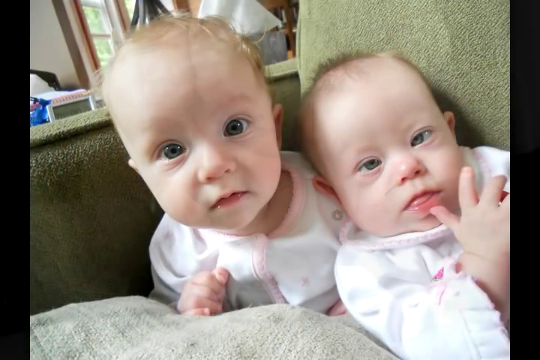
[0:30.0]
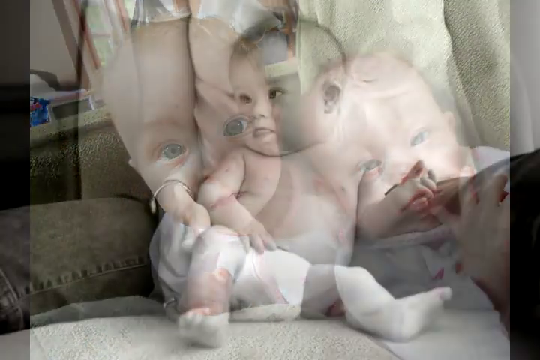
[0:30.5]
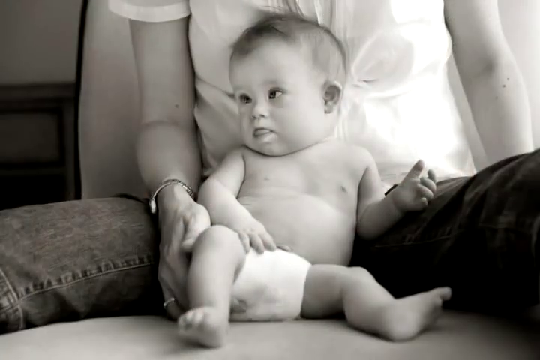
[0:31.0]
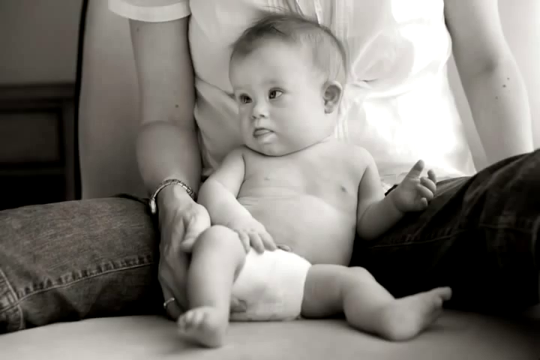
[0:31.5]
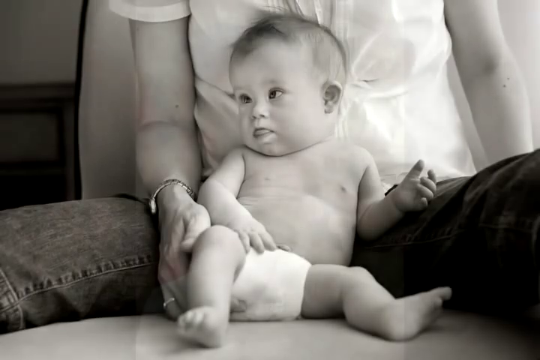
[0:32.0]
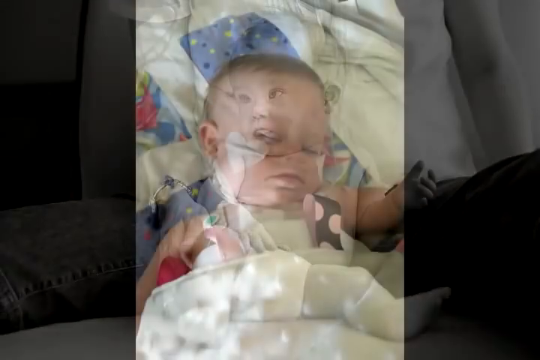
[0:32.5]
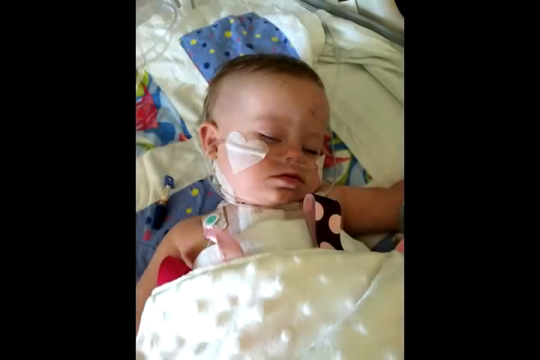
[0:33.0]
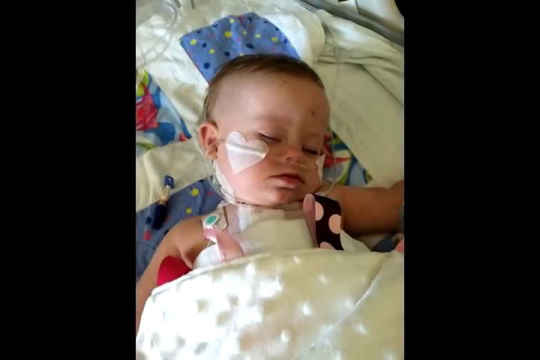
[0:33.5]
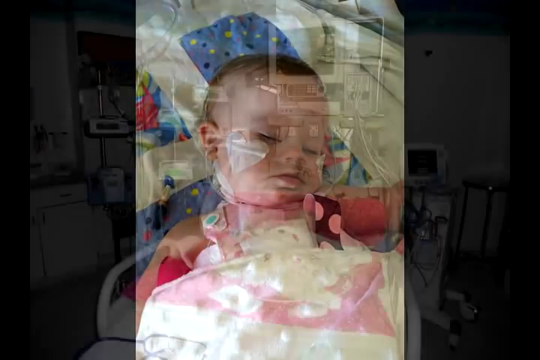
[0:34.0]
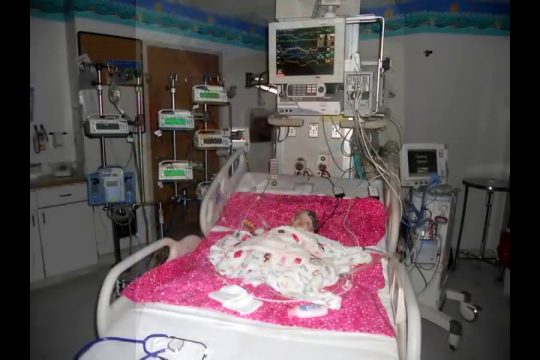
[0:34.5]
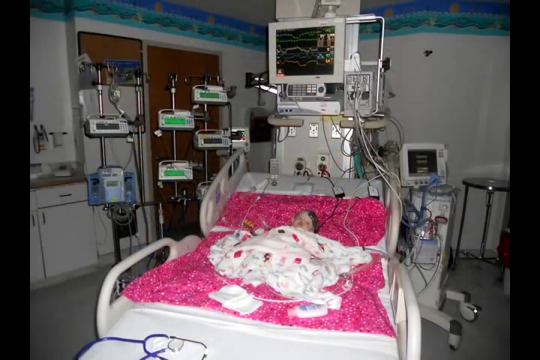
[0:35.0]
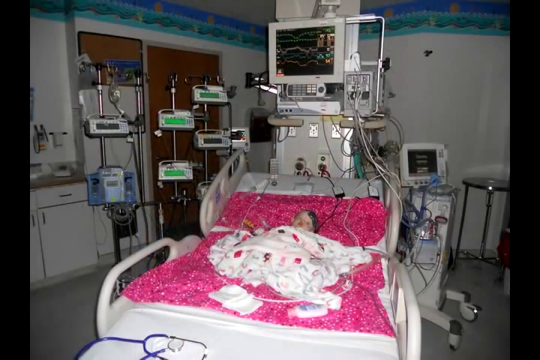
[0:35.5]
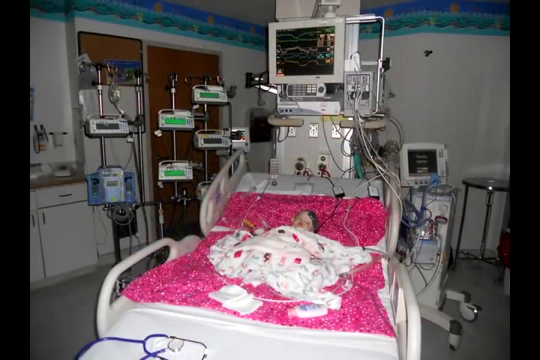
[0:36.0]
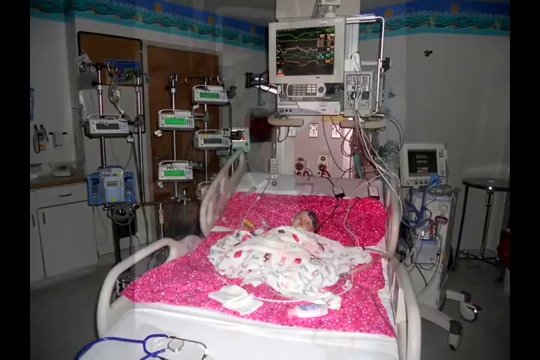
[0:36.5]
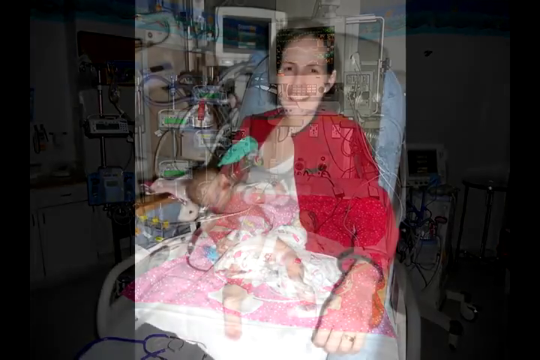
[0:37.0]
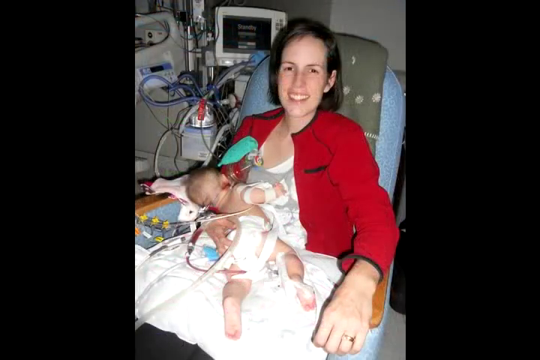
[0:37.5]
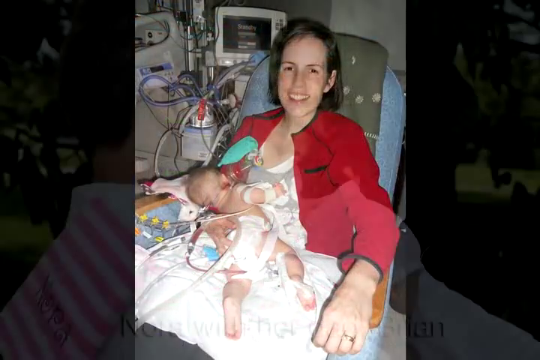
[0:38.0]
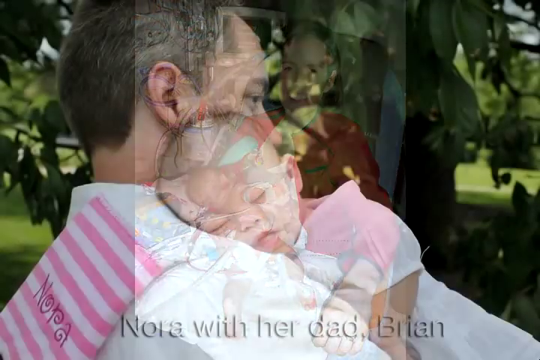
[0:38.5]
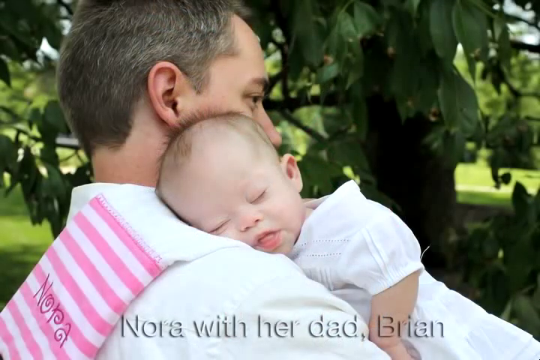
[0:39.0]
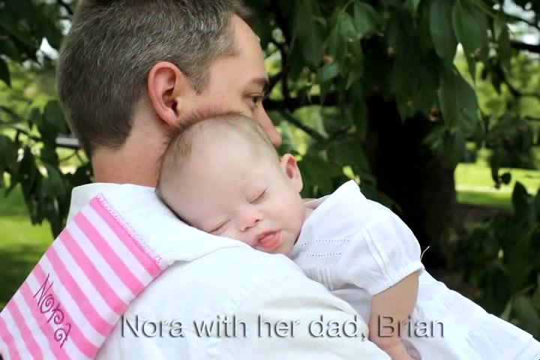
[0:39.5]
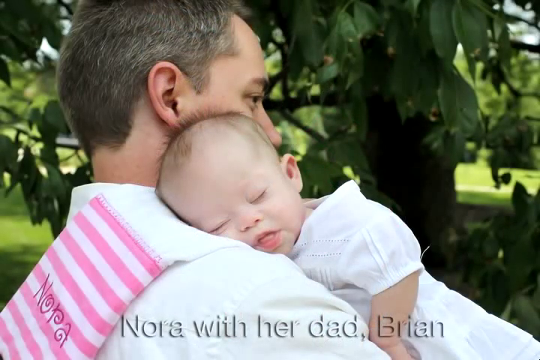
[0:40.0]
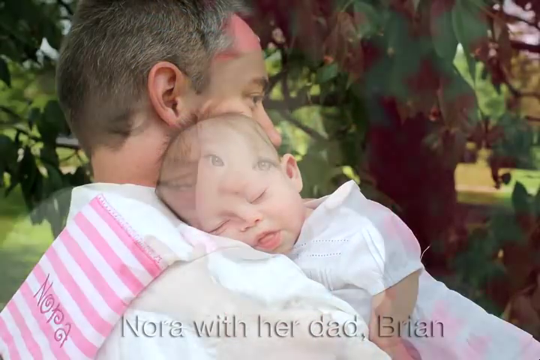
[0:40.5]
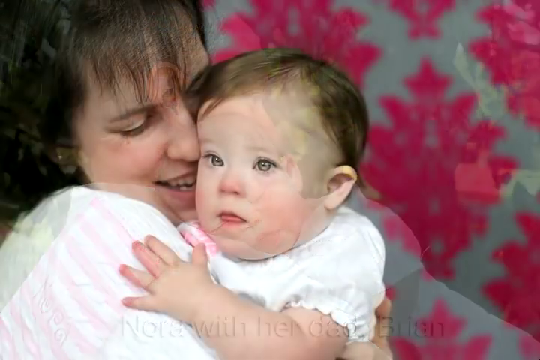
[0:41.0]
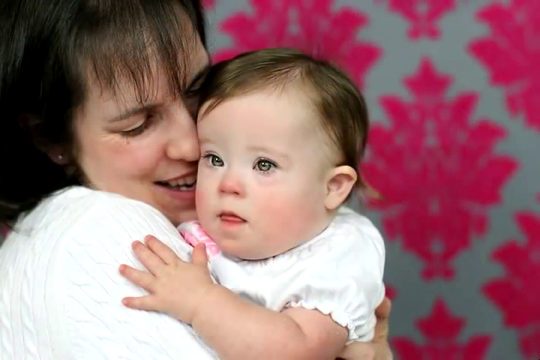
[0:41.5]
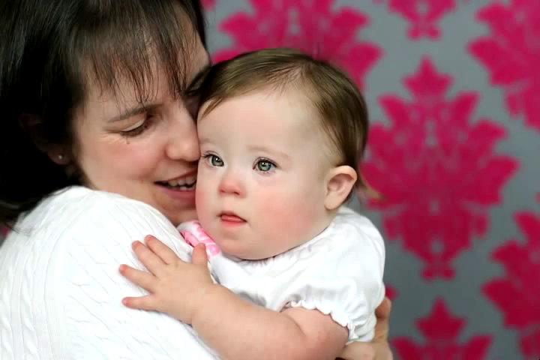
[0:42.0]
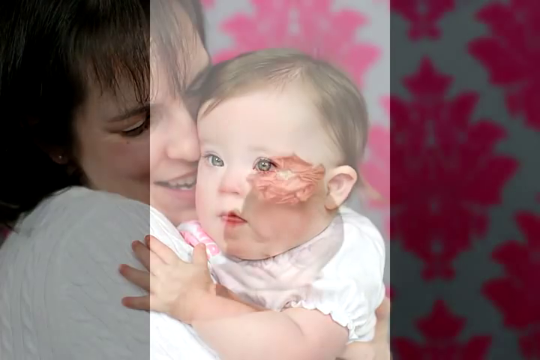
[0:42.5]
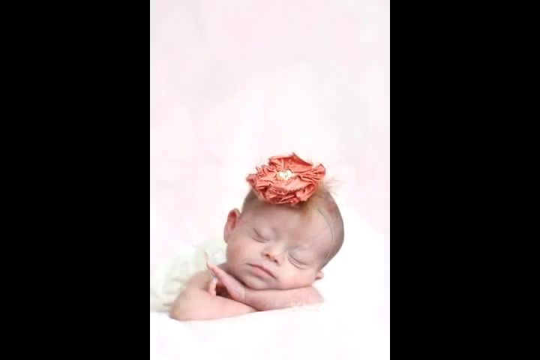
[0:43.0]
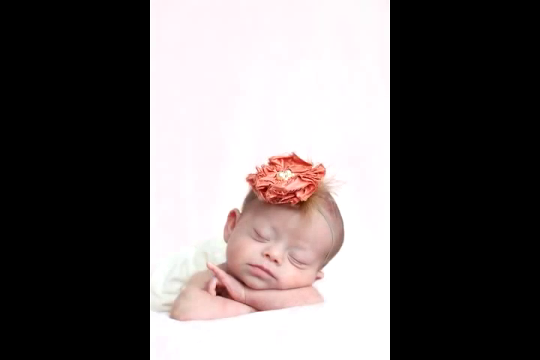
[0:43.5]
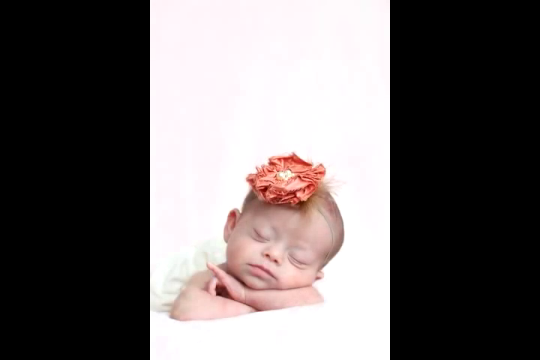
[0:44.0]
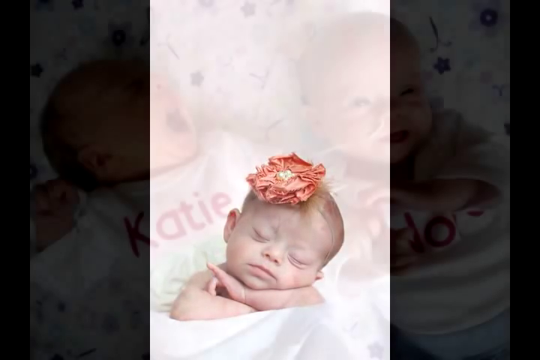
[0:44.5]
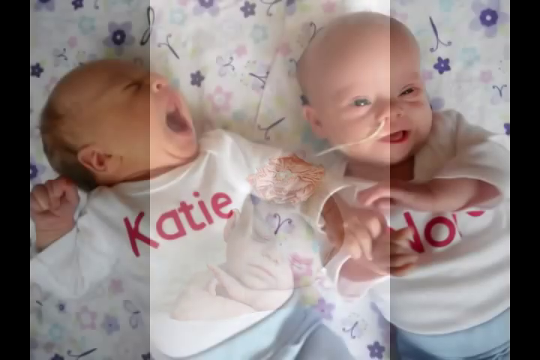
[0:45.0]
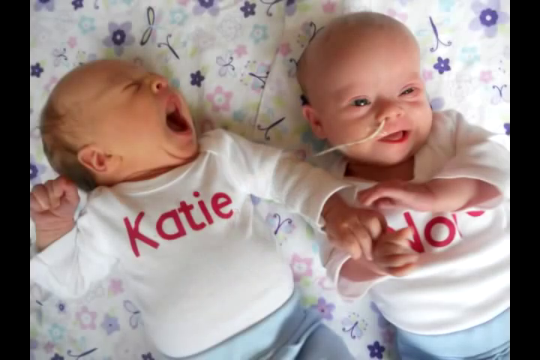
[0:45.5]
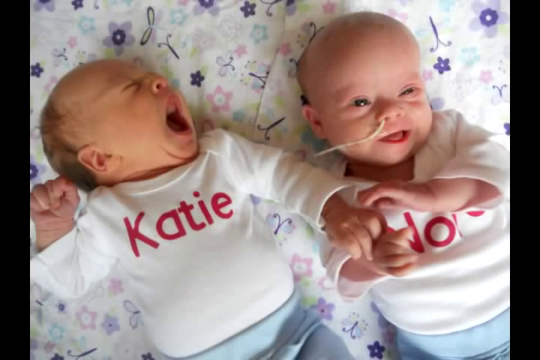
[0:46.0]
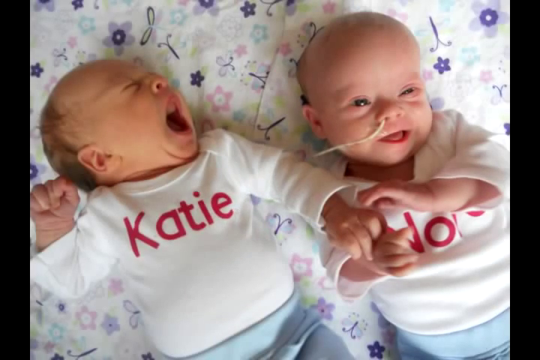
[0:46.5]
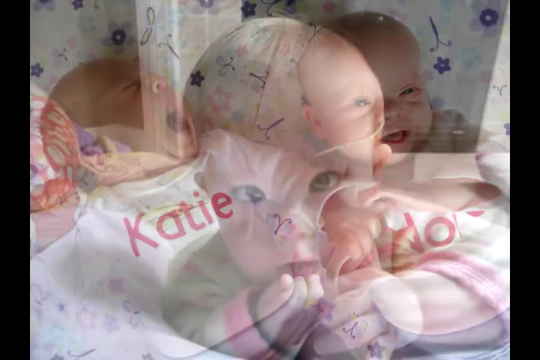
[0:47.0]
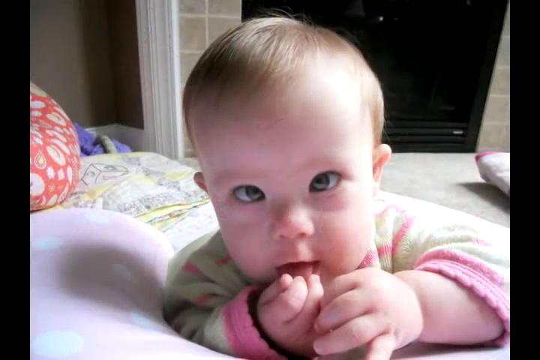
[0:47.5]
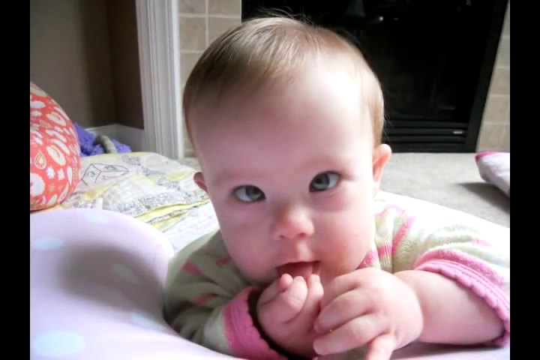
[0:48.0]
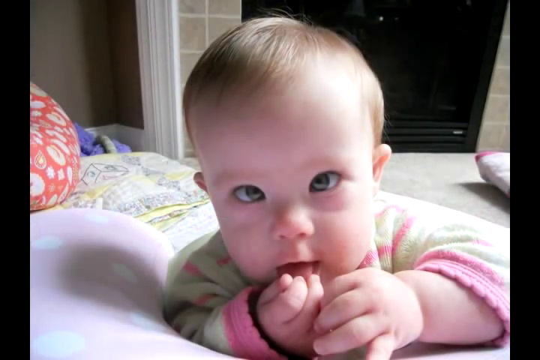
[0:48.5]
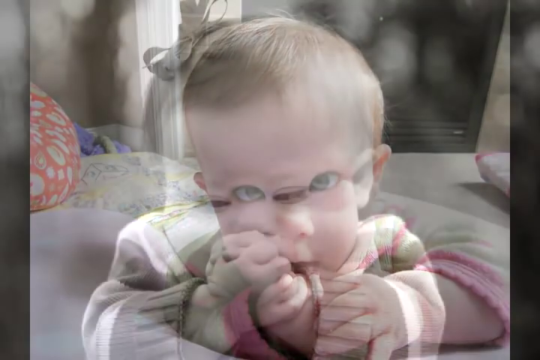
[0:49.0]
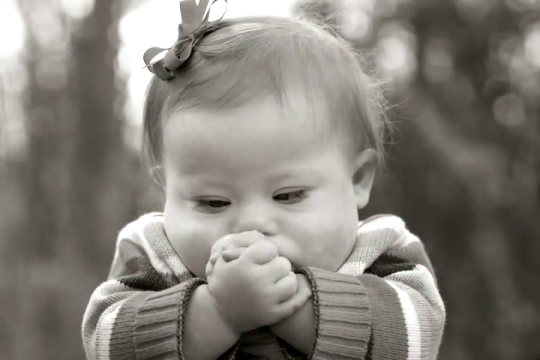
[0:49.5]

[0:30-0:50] A picture shows the twins, Nora and her sister Kate; one little girl appears healthy, while Nora has a visible difference in her eyes. Pictures then follow Nora as she grows up. A black and white photo shows her, with her eyes visibly different. Another shows her looking like she is possibly in a hospital, with tubes going into her and a tube taped underneath her nose; she appears to be asleep. In a hospital room she is hooked up to many different machines and tubes, lying on a pink blanket with a white blanket with designs on it covering her. The mom is shown at the hospital with her daughter. Text at the bottom reads "Nora with her dad, Brian" over a picture of the father outside with a tree in the background, something like a burp cloth with pink and white stripes over his shoulder; Nora, in a white dress, is lying on his shoulder, sleeping. The mother is shown again with the daughter, then Nora with her eyes closed, wearing something like a flower band around her head with a big orange flower. Katie and Nora appear together, then another picture of Nora in which her eyes look like they are crossed, another black and white picture of Nora, and another picture of Nora and her sister.